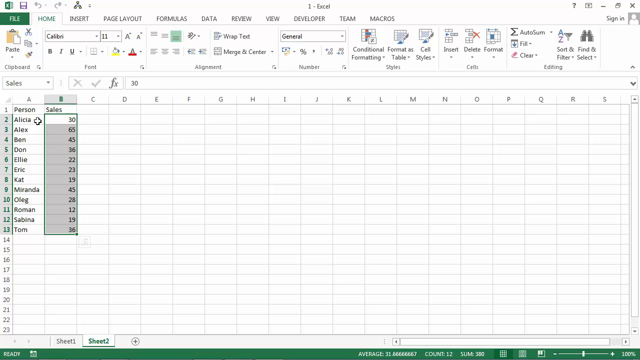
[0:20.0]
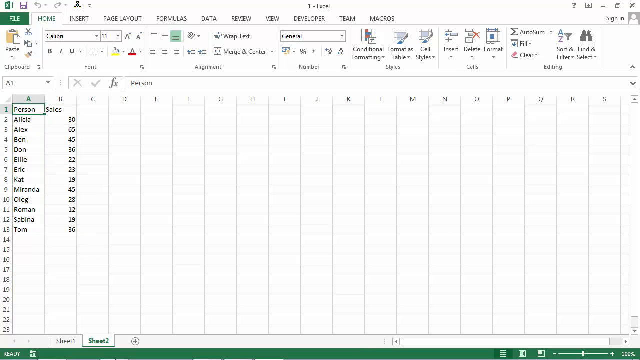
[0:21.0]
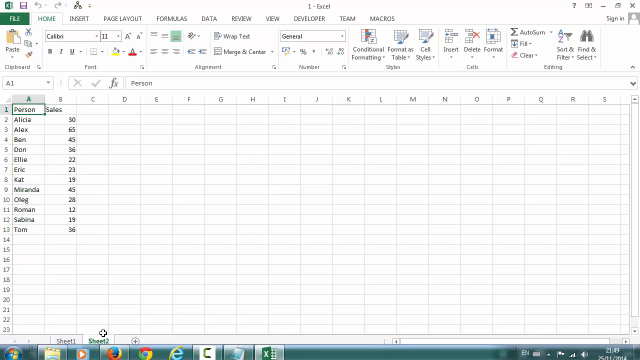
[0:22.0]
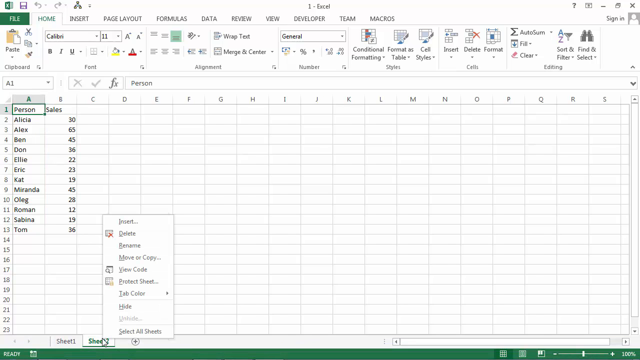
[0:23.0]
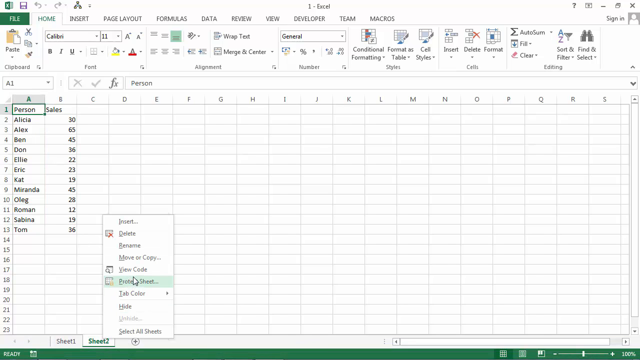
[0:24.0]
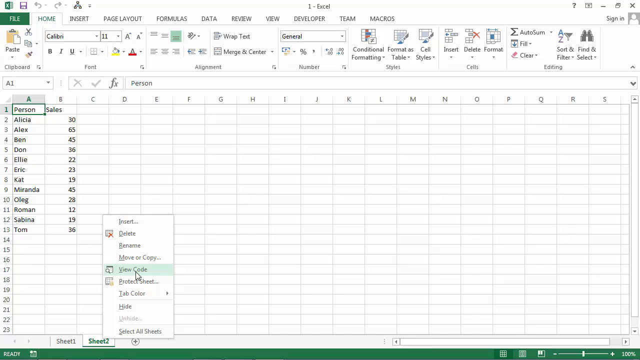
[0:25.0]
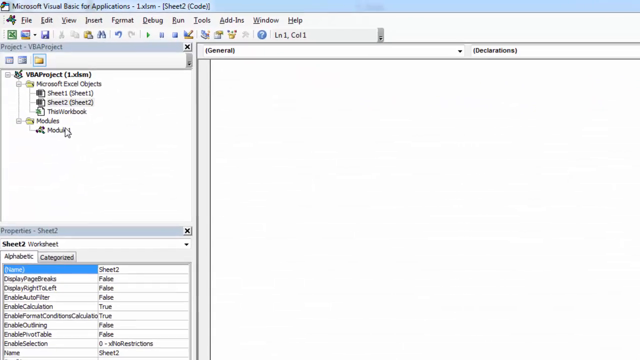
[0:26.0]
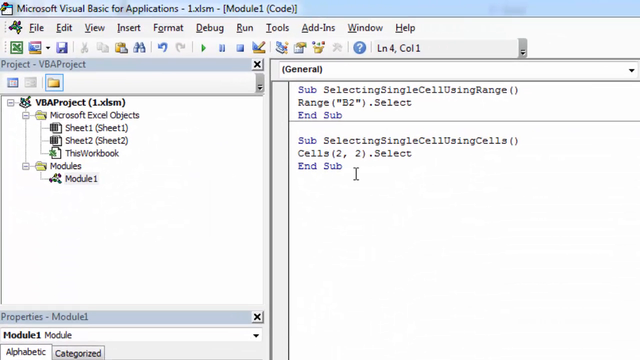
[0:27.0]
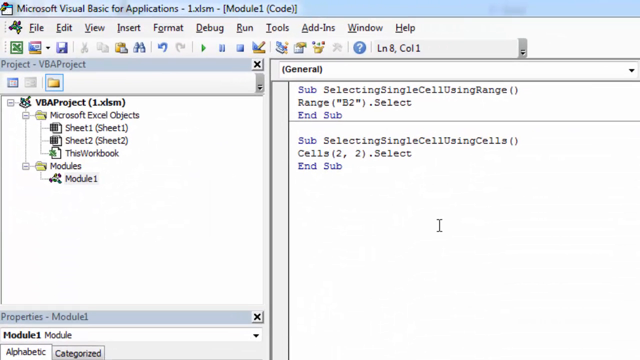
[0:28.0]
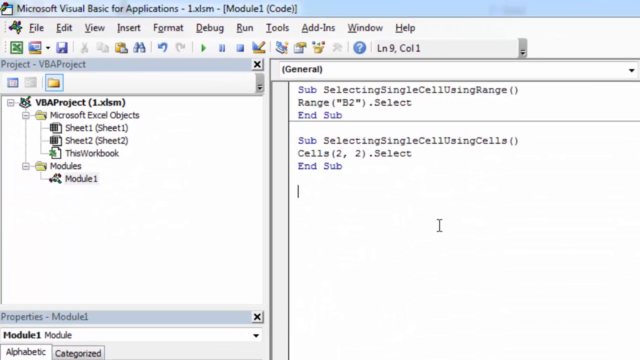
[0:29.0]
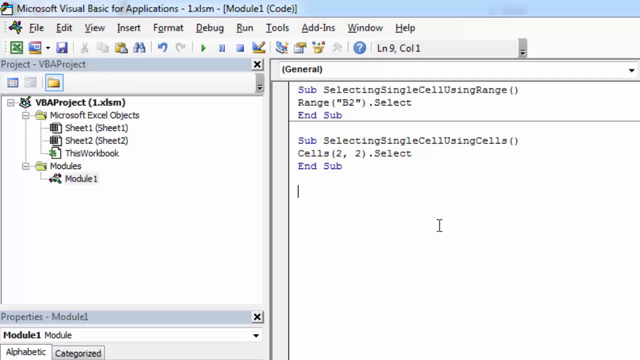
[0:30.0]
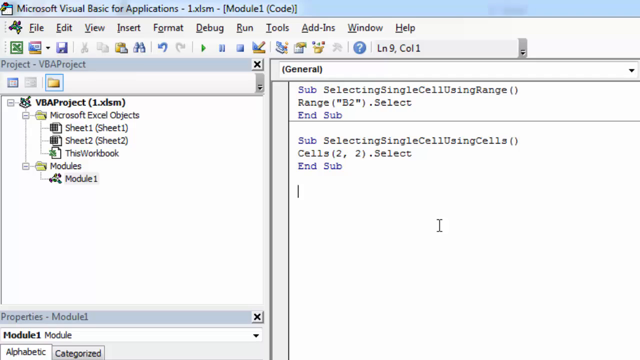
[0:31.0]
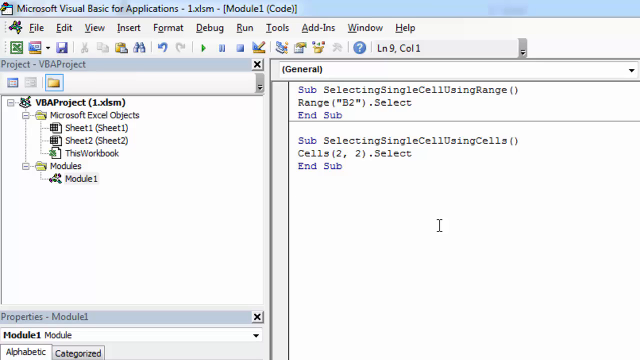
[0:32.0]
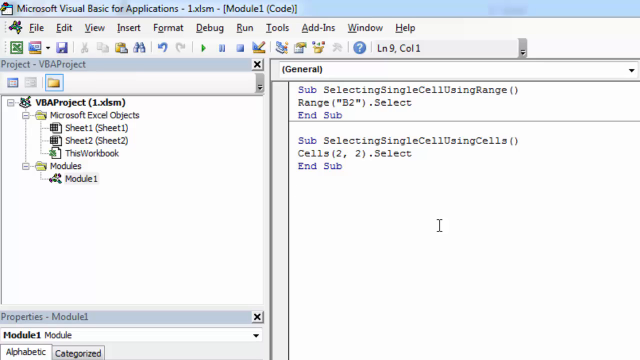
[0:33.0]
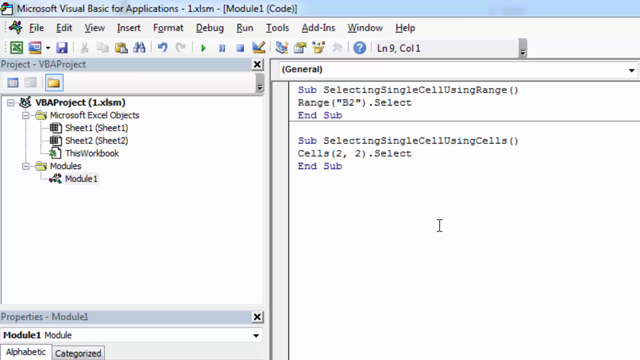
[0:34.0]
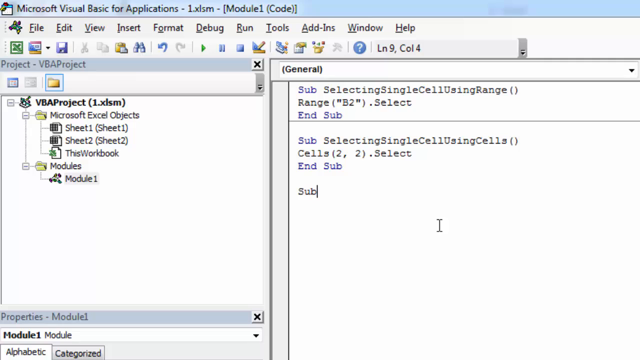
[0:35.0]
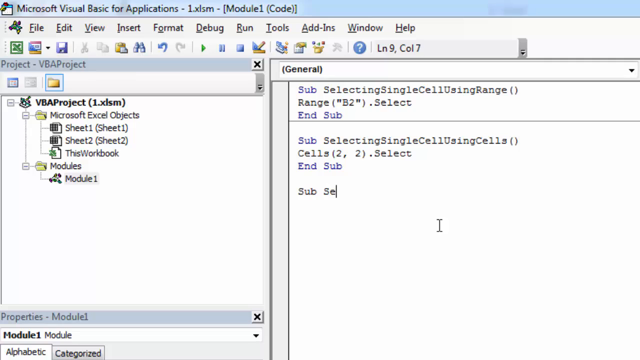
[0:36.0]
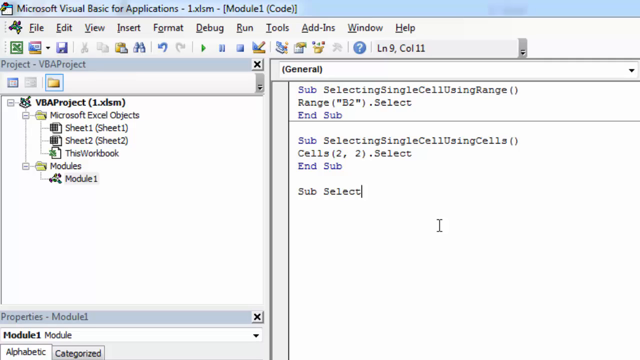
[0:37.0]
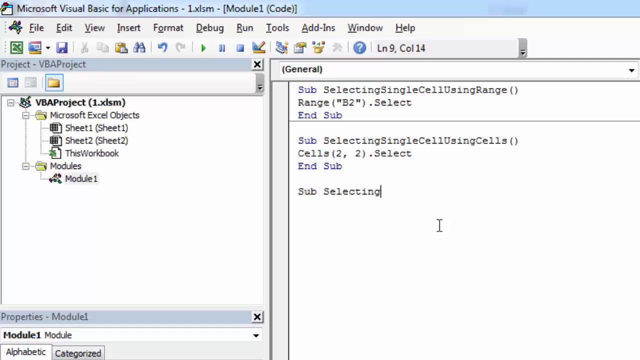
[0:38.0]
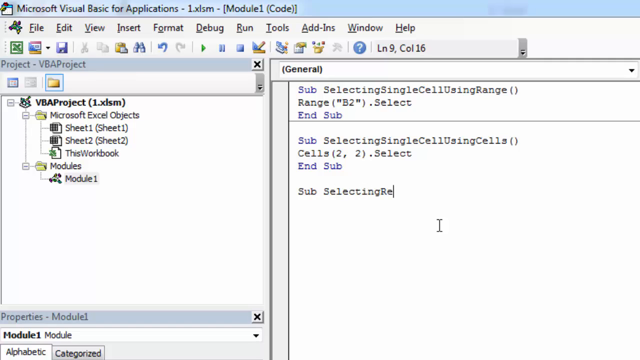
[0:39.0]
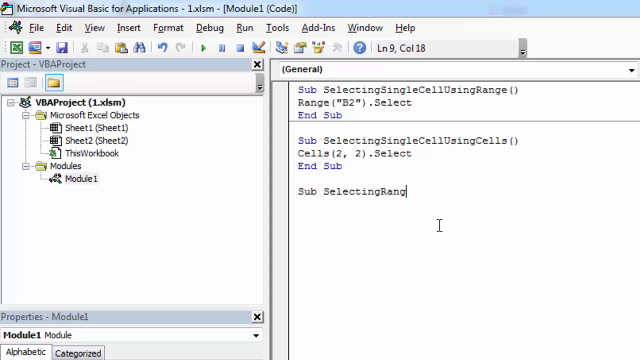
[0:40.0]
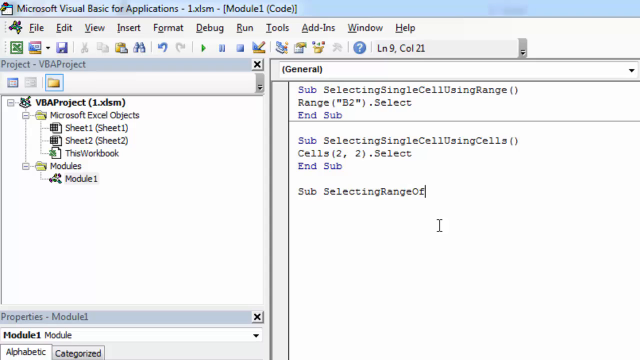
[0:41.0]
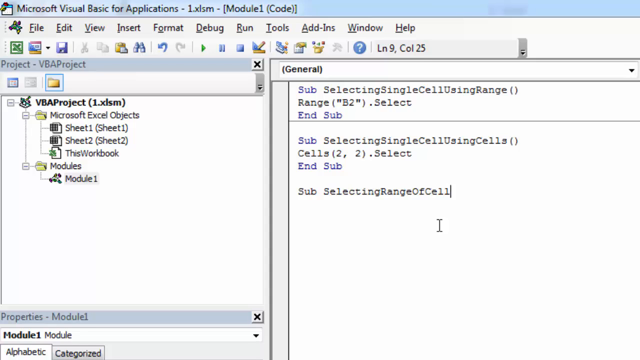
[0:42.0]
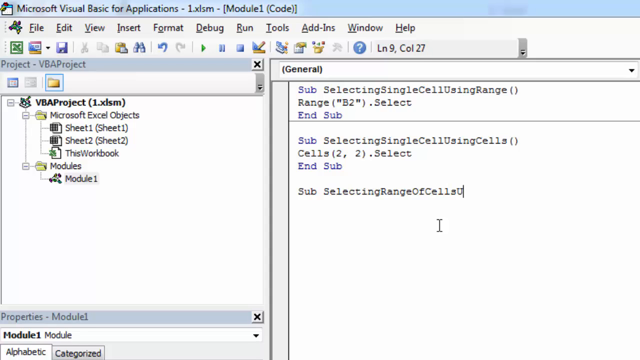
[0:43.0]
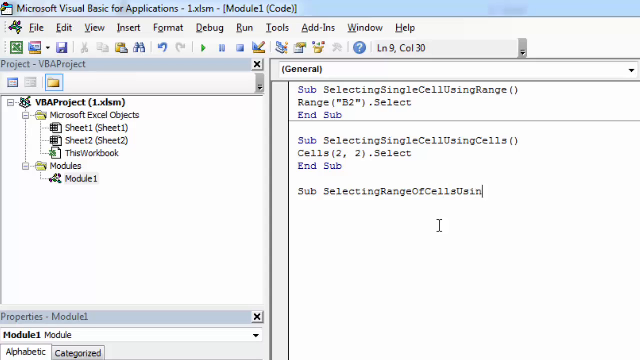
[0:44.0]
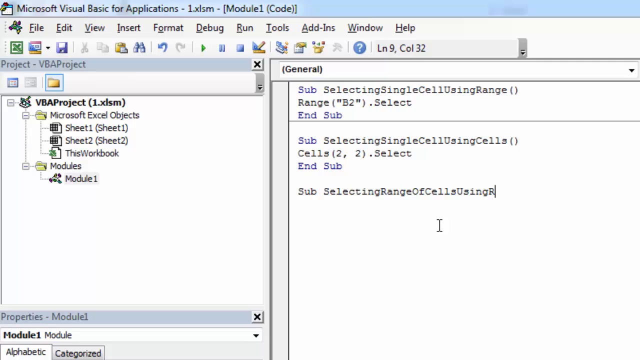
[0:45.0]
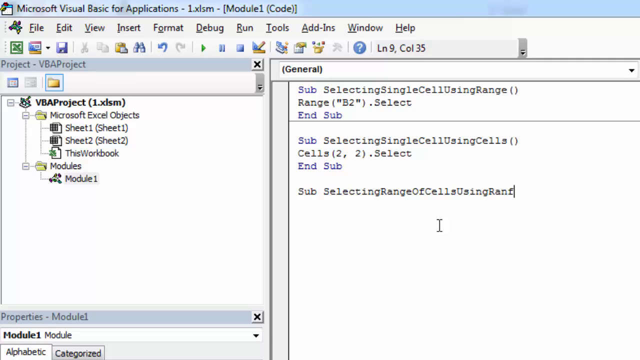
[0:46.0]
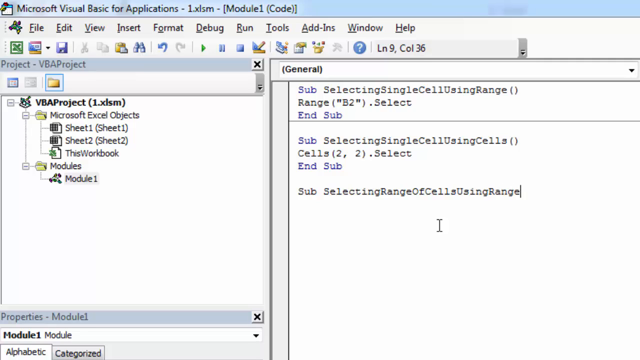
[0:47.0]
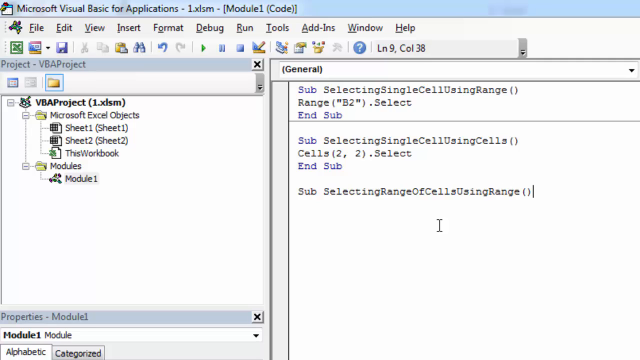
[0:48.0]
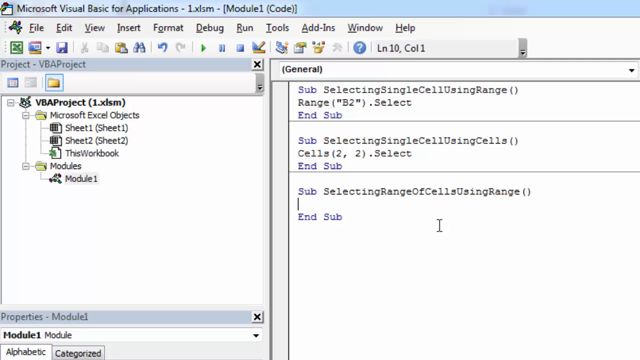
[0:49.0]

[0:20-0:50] The same Excel sheet is shown, with the cells containing sales data from B2 to B13 selected. The plus-shaped cursor hovers over and then selects the person box, A1, which becomes outlined in green, and the sales data is deselected. After a pause, the user pulls up the right-click menu next to the cursor and selects the option "View Code", which pulls up another program titled "Microsoft Visual Basic for Applications". It has two toolbars across the top and three panels. The camera zooms in on the upper left and the right-hand panel, and an option titled "Module 1" is selected, which makes code appear in the right-hand panel. After a pause of a few seconds, the user begins typing additional code underneath the existing code in the right-hand panel. He writes one line of code about selecting cells within a range, ending with a second line that says "end sub", which appears to show up automatically after he finishes typing his line. The difference between this code and the previous code appears to be that the previous code was intended to select single cells.